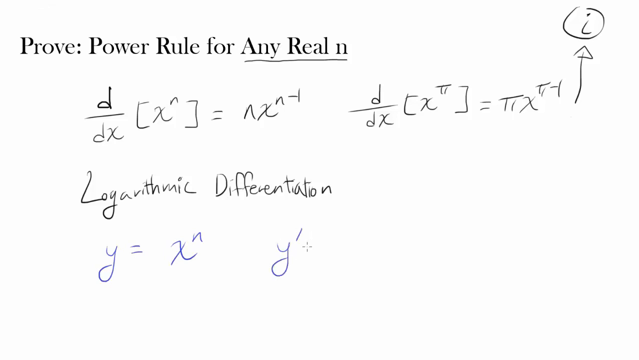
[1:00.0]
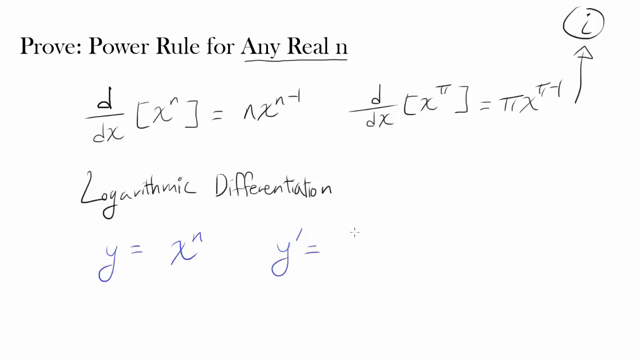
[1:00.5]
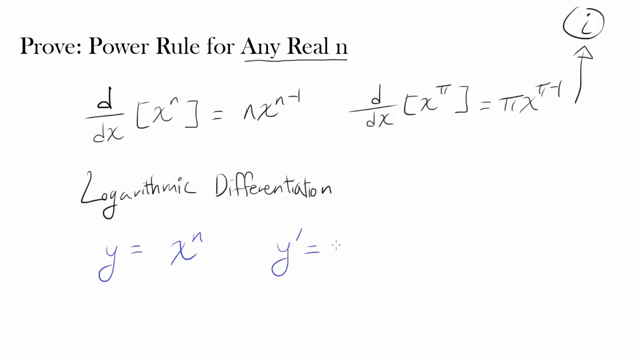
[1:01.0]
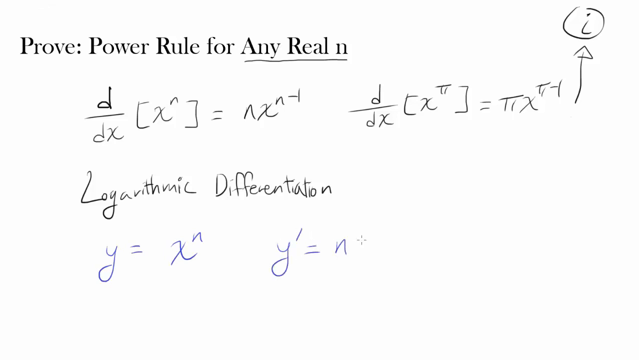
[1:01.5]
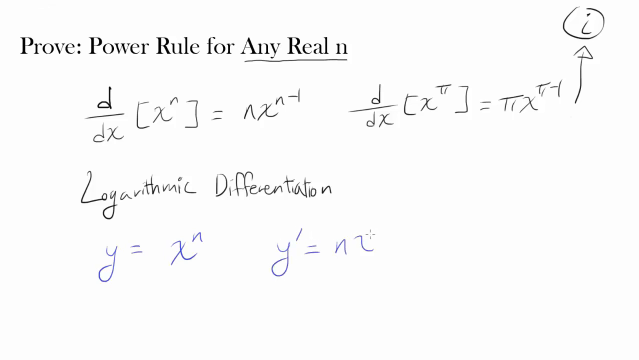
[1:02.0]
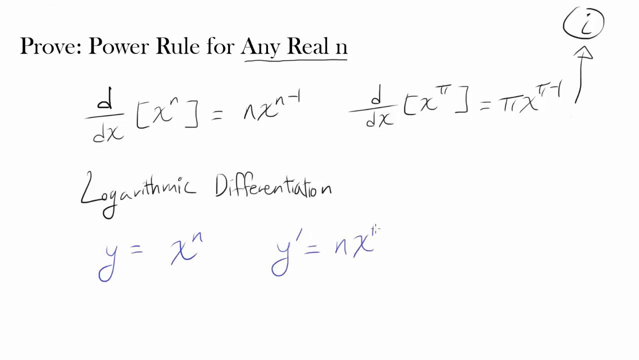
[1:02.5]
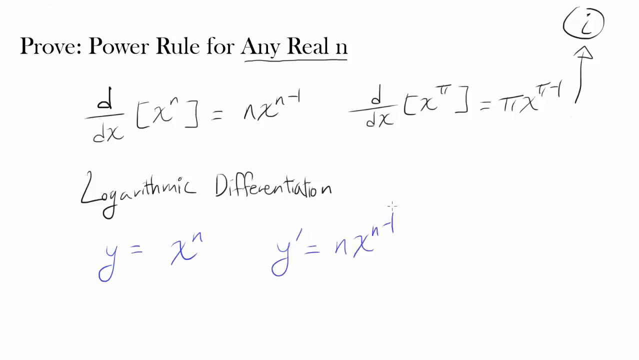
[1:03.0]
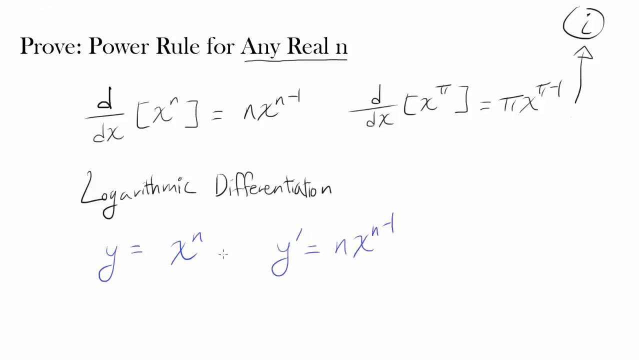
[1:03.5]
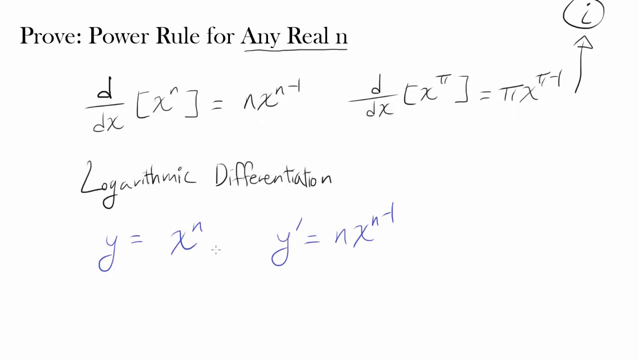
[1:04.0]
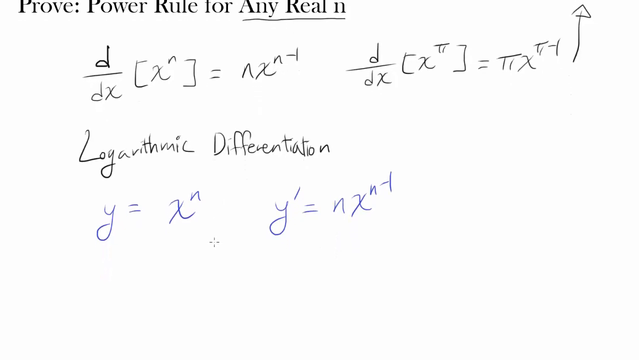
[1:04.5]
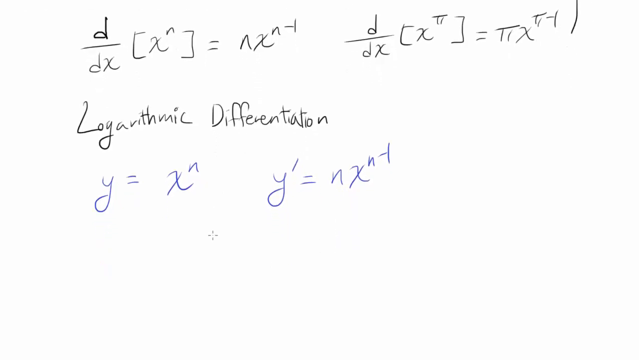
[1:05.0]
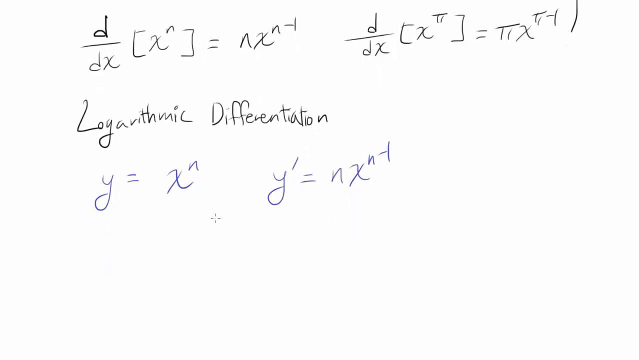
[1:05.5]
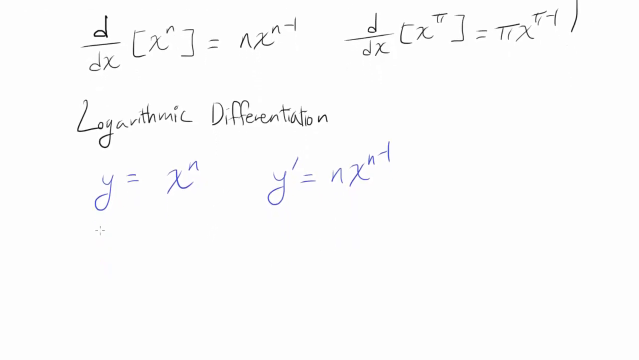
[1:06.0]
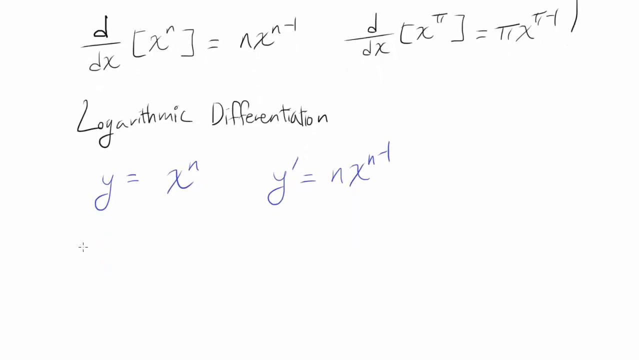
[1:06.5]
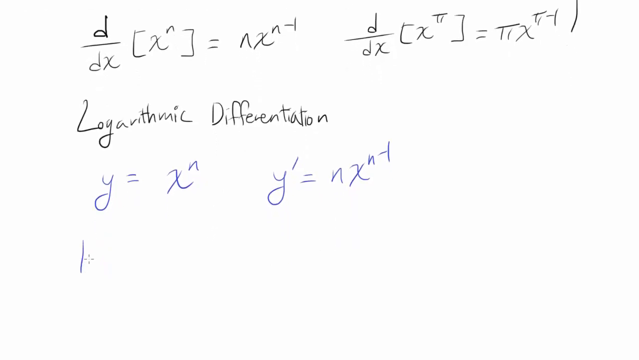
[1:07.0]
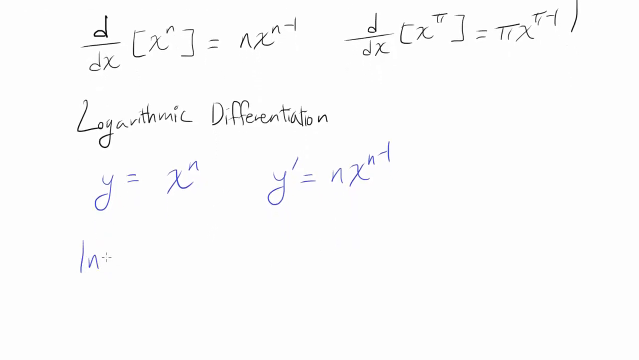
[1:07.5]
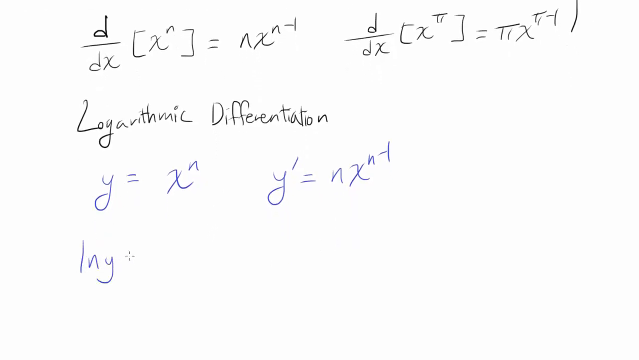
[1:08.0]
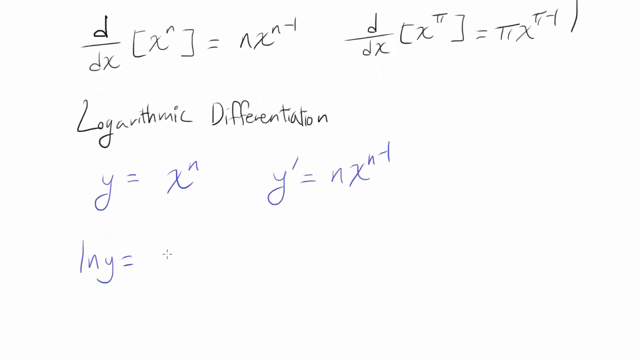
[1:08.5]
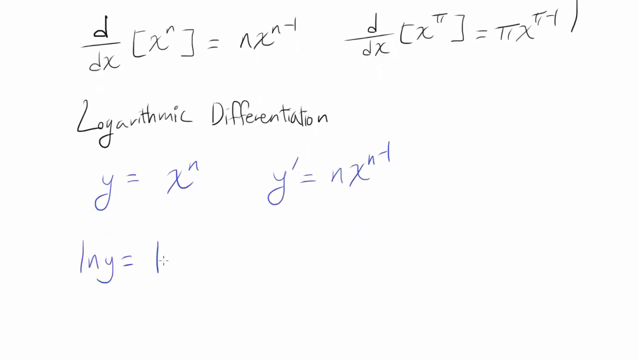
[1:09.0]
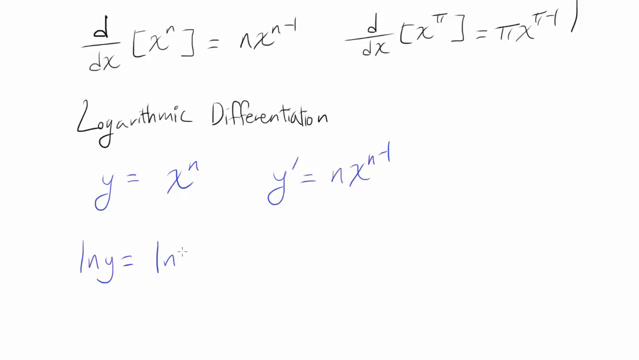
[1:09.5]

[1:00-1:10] A whiteboard has very thin writing, and a small cursor moves across the board doing the writing. The heading reads "prove power rule for any real", and the view scrolls up from the bottom to the top. The first equation is d over dx, a bracket, x with a small n at the upper right, a bracket, an equals sign, then nx with nt to the upper right. The second equation is a small d over dx, a bracket, x with a Roman numeral two at the top right, a bracket, an equals sign, and letters with a t minus one at the top right. A line goes up with a triangle at the top to a circled i. Next comes the wording "logarithmic differentiation" and an equation beginning "y =", followed by another equation with y and d over, as the screen slowly scrolls from the bottom to the top.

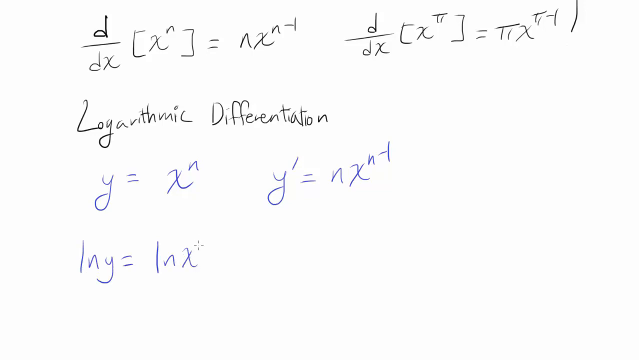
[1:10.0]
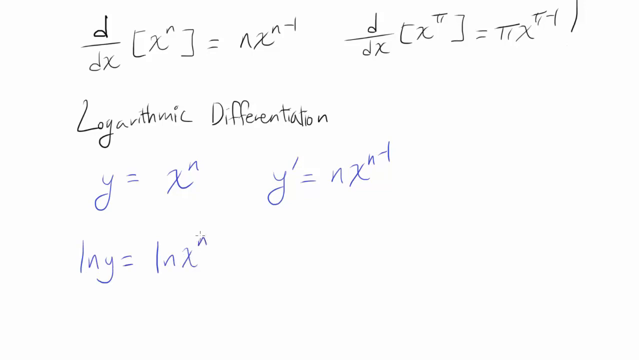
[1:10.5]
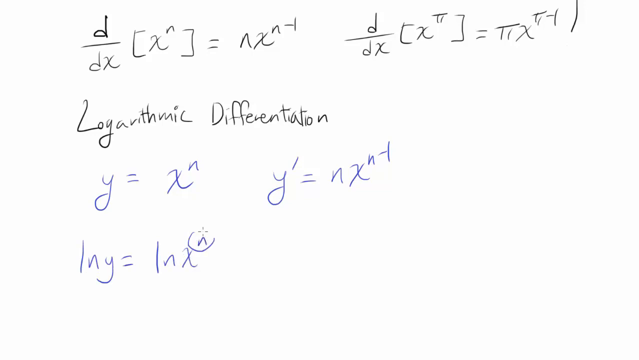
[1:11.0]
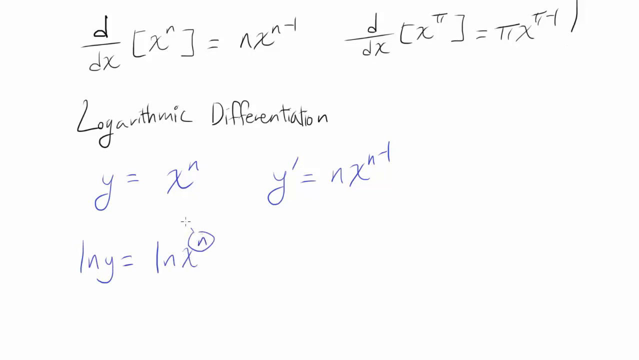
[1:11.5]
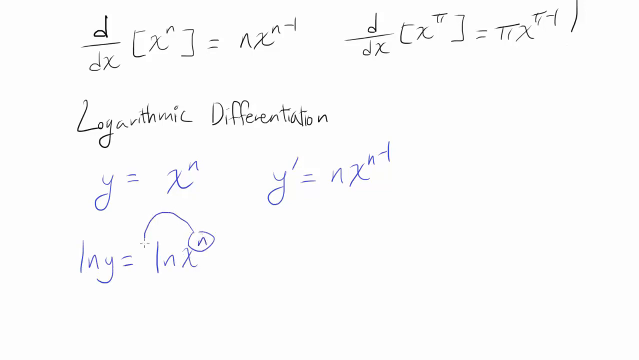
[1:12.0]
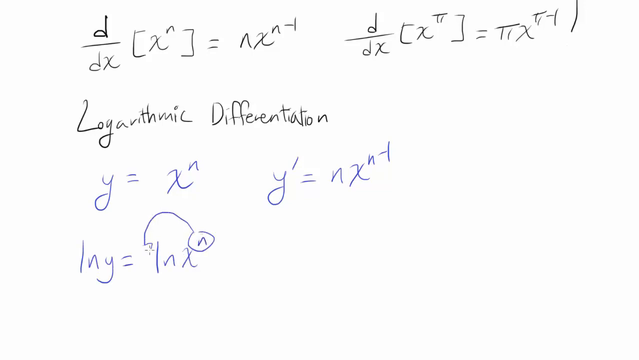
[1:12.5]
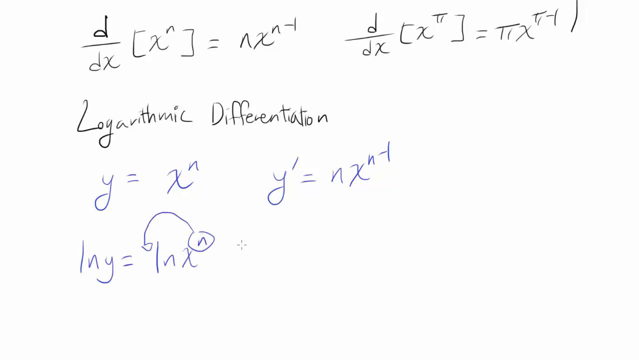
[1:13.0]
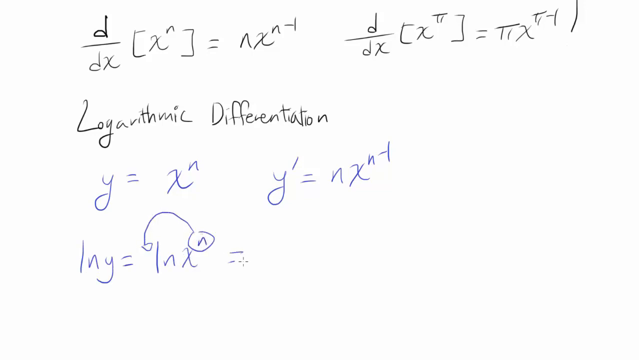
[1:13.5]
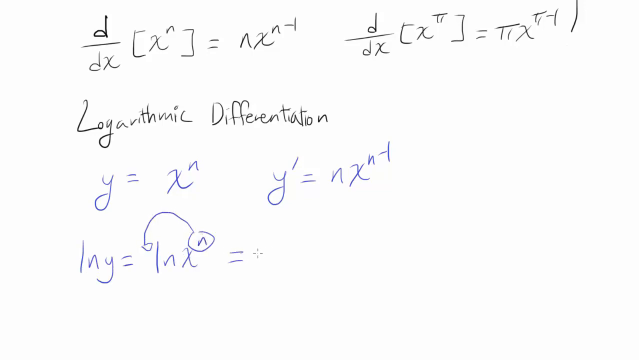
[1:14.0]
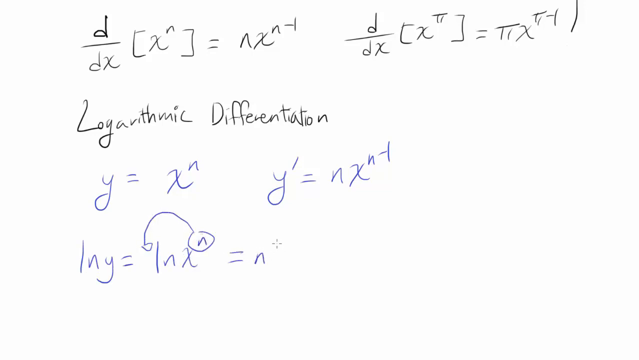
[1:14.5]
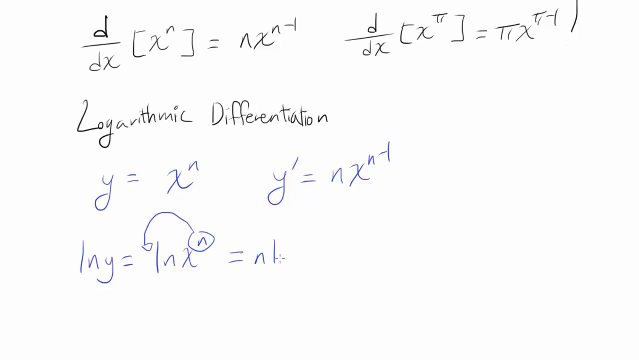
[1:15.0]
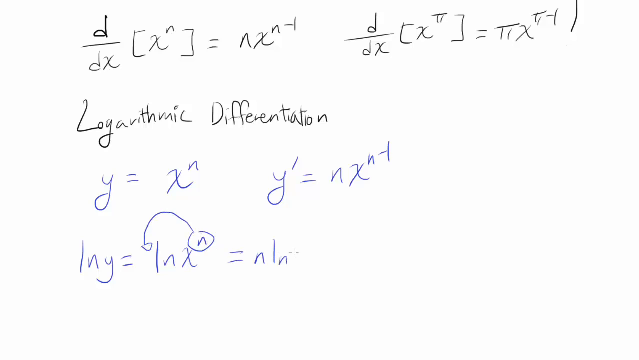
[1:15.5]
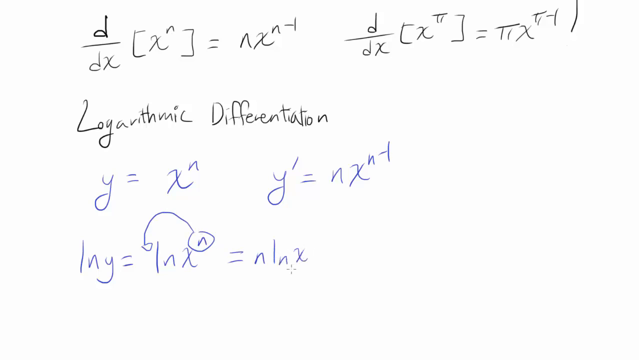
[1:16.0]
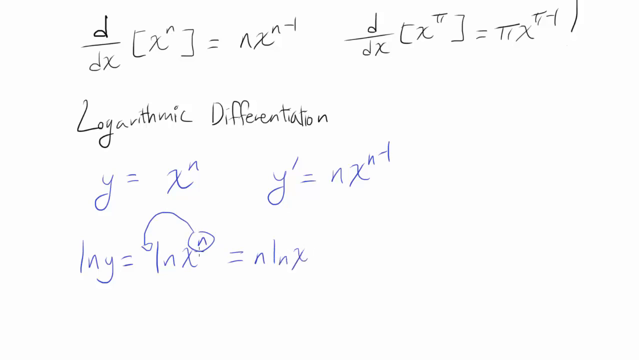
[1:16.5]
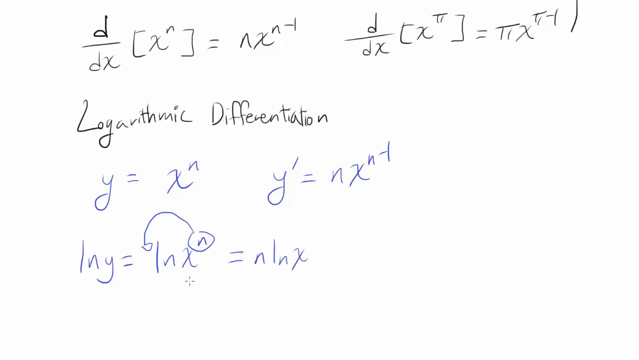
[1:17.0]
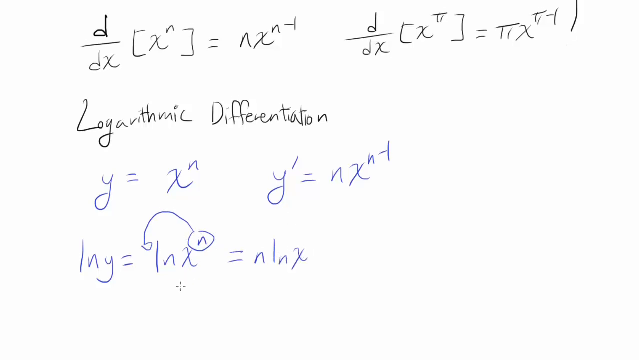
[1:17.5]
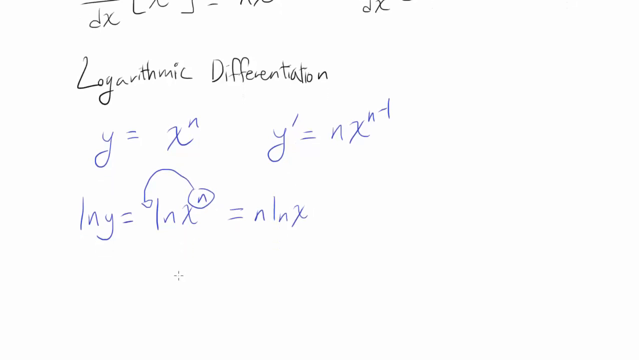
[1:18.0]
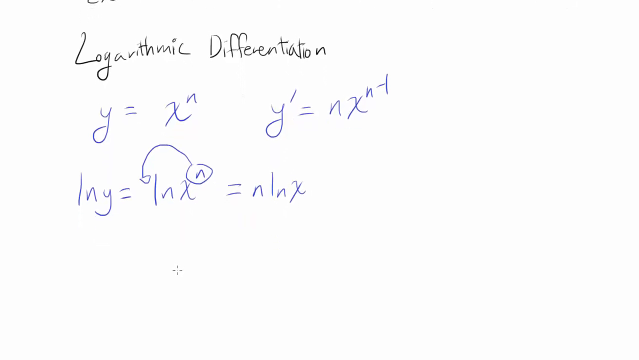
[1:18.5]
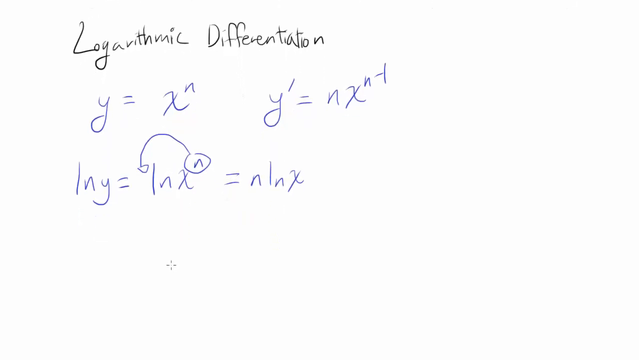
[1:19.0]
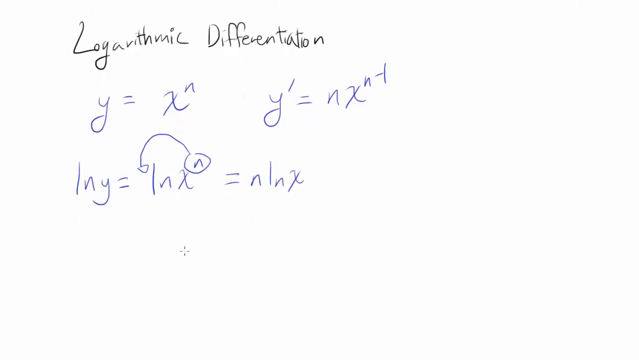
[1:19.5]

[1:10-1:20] A mathematical equation is shown, with movement at the bottom. It reads "ln y equals" followed by more terms. A line goes over it, and a line circles the n at the very top of the equation, making a semicircle with an arrow pointing down to the one. Then comes an equals sign and n ln x. The screen scrolls so the writing moves from the bottom up toward the top. The first two lines are in black and the next two lines are in blue: from "logarithmic differentiation" up the writing is black, and below it the writing is blue.